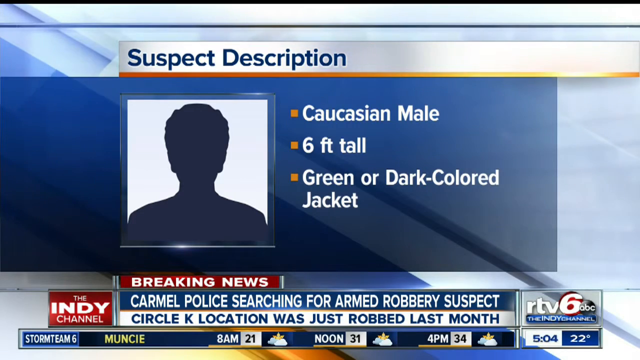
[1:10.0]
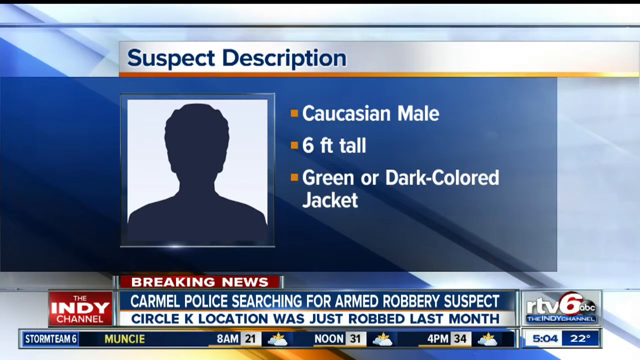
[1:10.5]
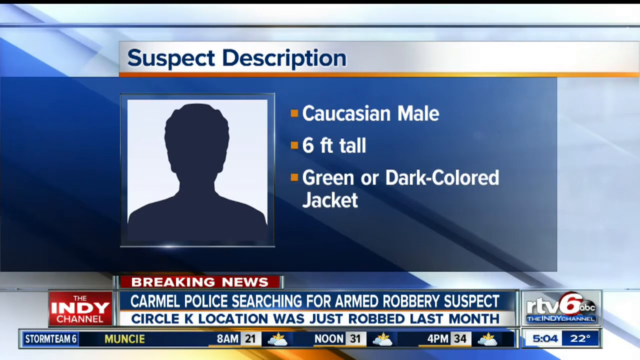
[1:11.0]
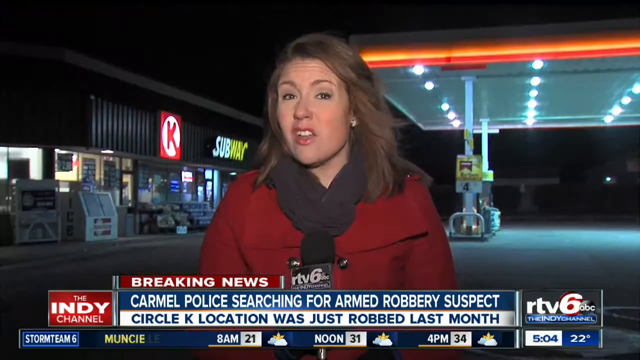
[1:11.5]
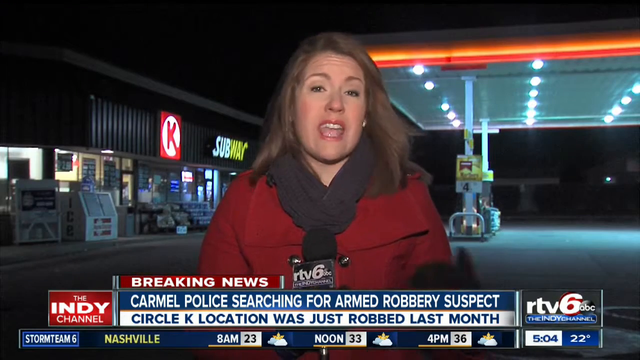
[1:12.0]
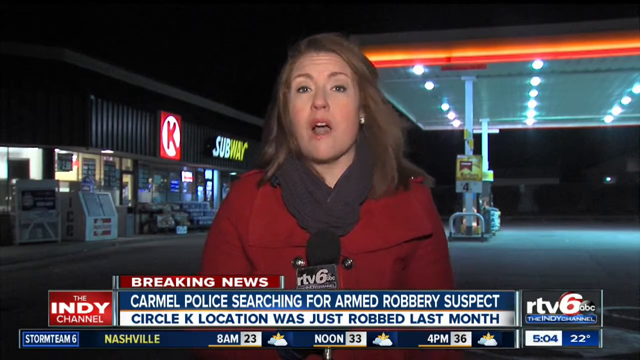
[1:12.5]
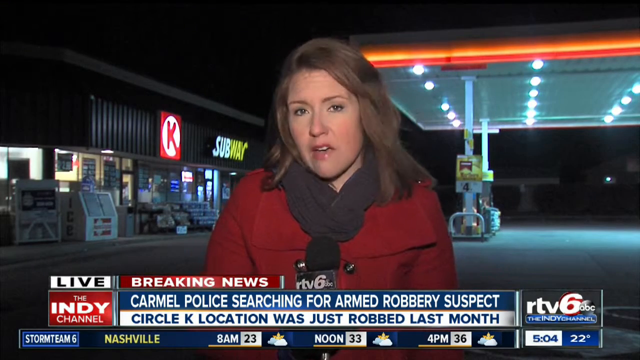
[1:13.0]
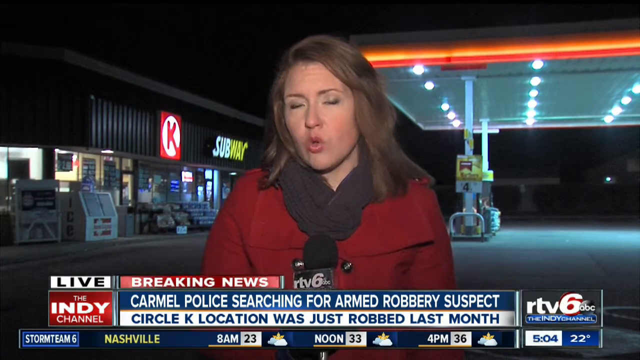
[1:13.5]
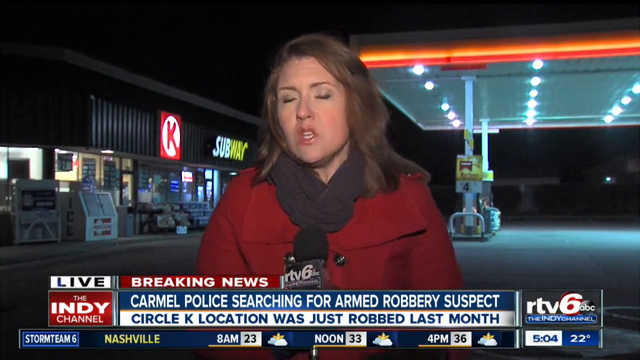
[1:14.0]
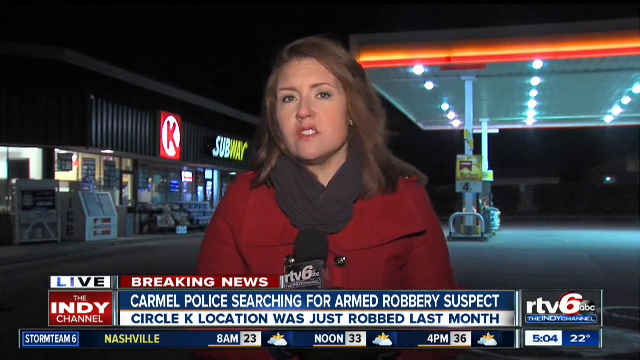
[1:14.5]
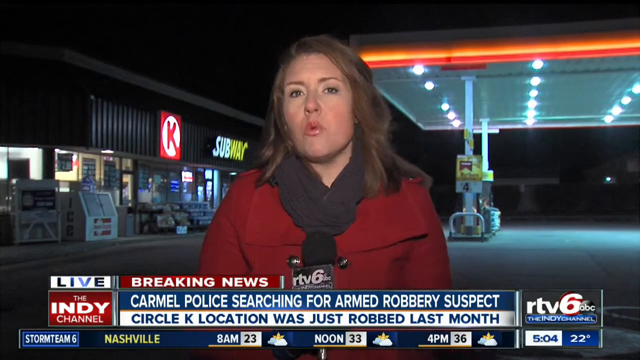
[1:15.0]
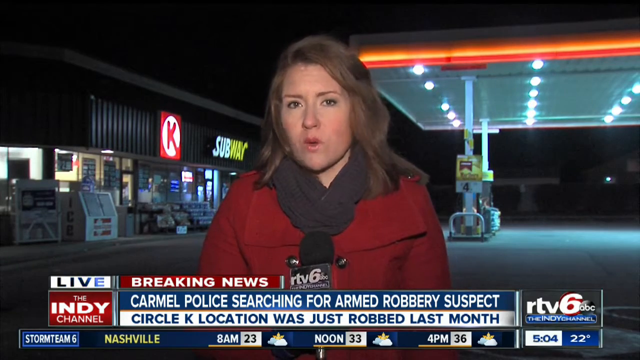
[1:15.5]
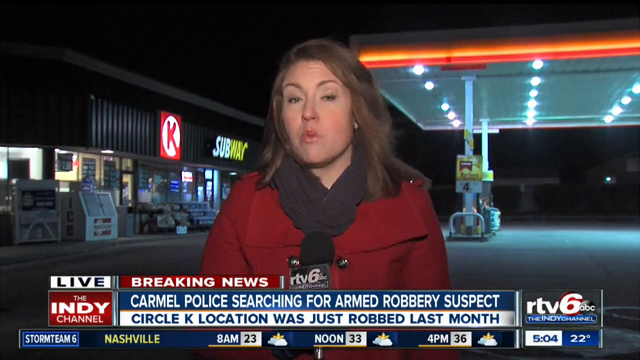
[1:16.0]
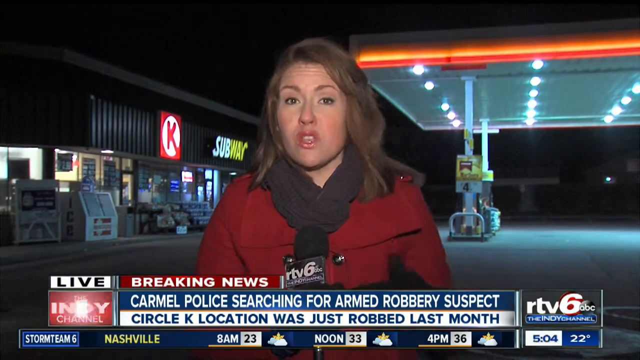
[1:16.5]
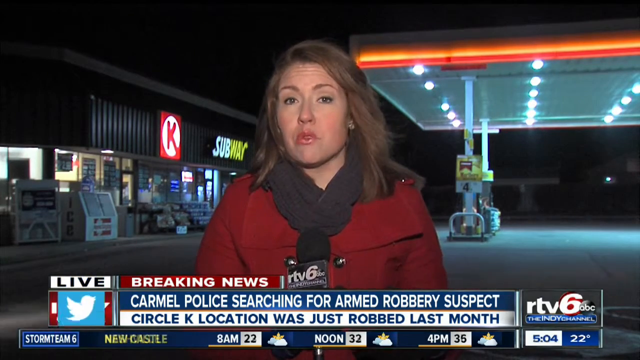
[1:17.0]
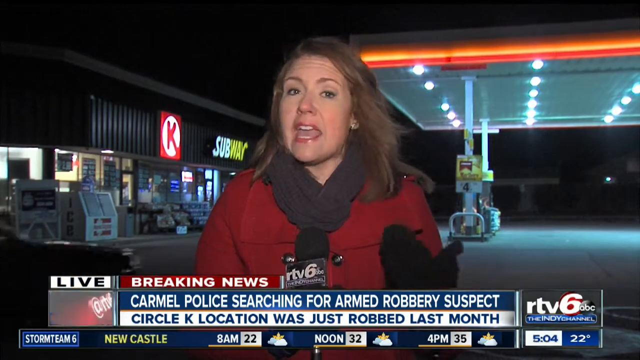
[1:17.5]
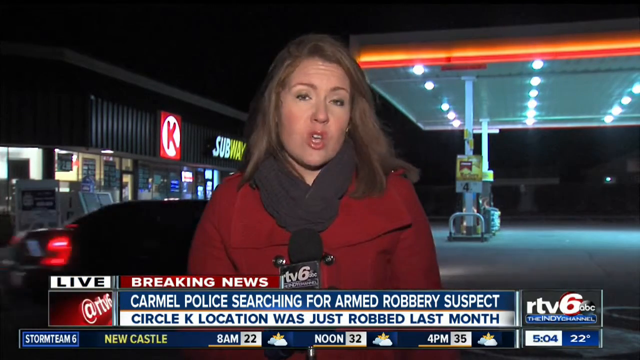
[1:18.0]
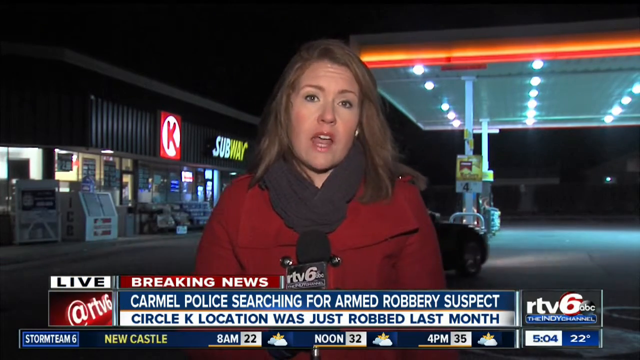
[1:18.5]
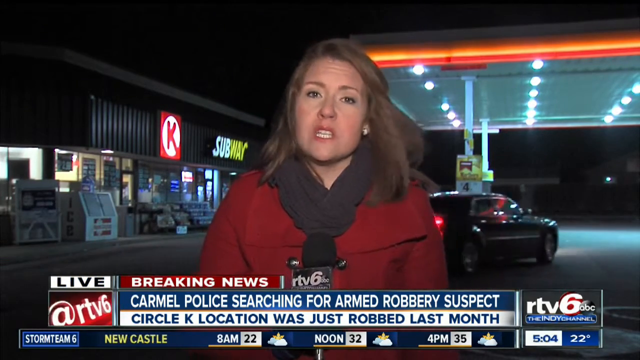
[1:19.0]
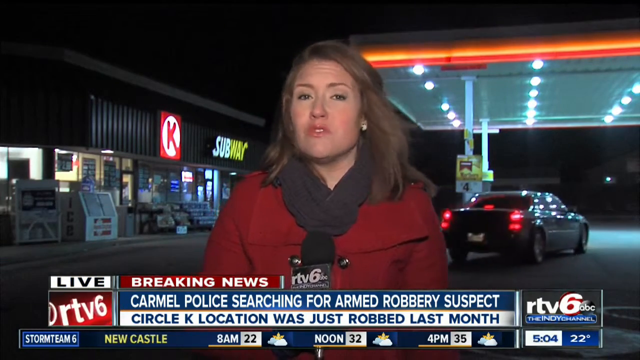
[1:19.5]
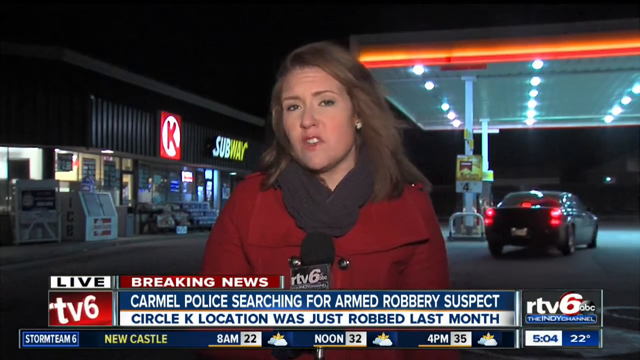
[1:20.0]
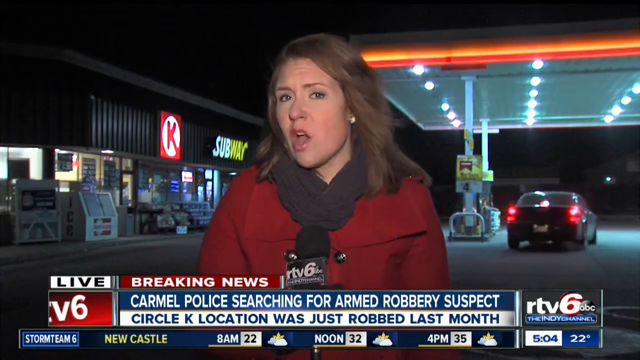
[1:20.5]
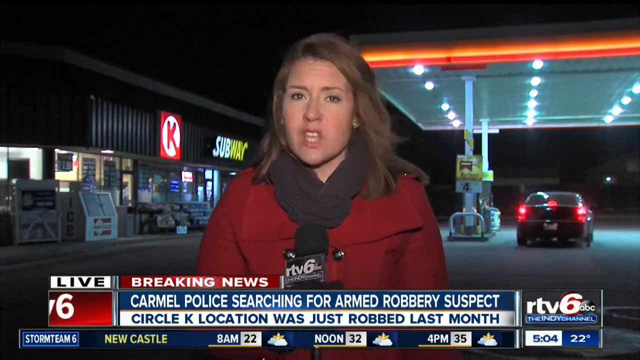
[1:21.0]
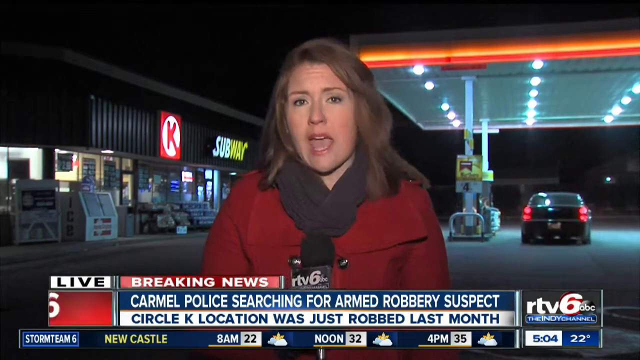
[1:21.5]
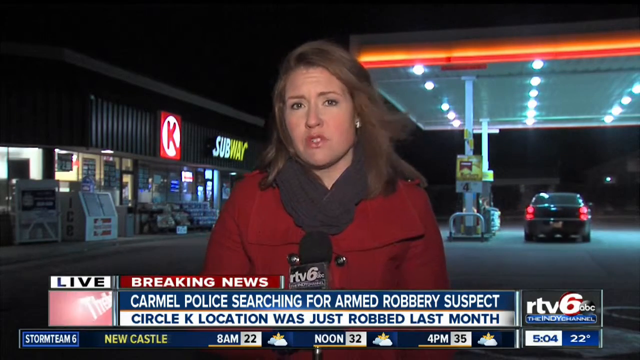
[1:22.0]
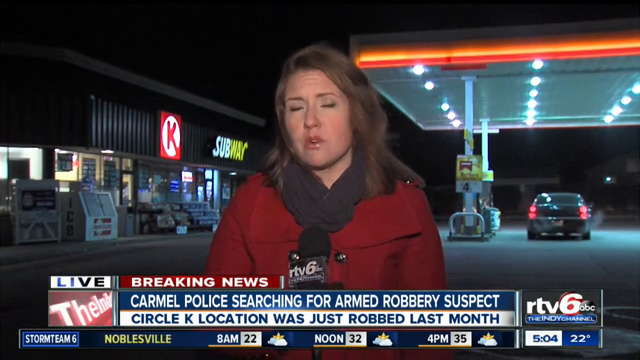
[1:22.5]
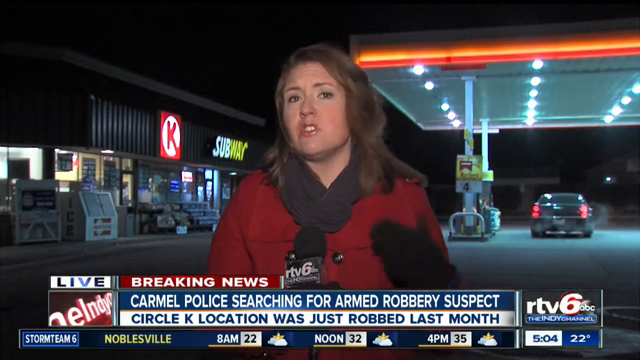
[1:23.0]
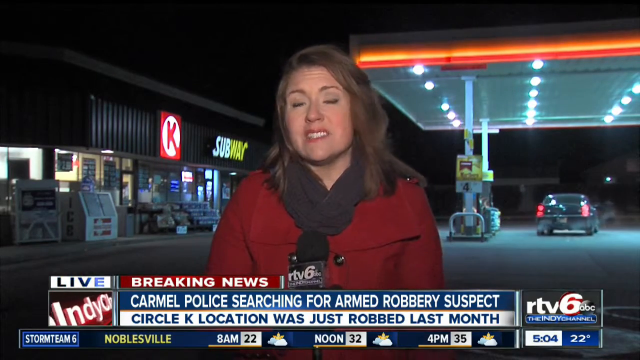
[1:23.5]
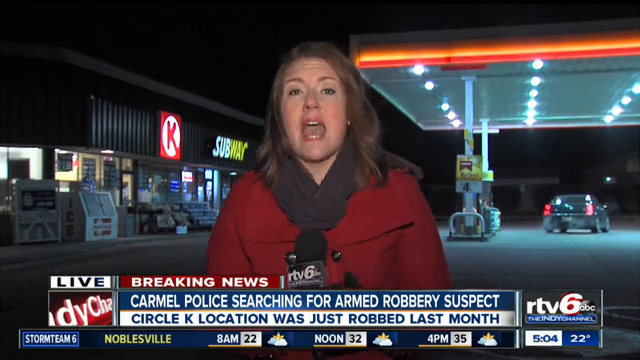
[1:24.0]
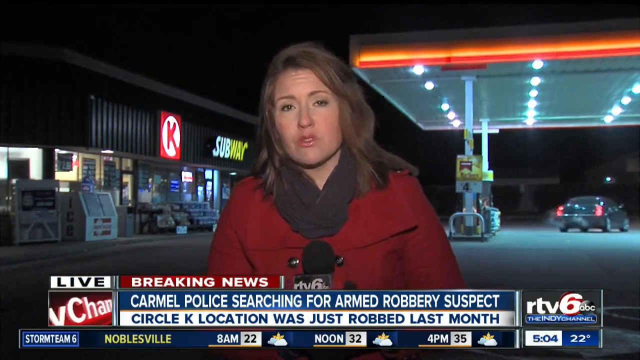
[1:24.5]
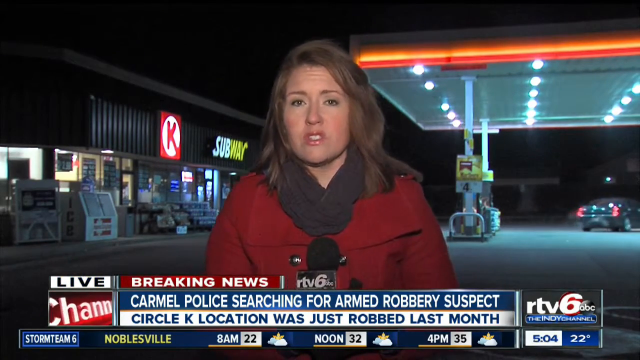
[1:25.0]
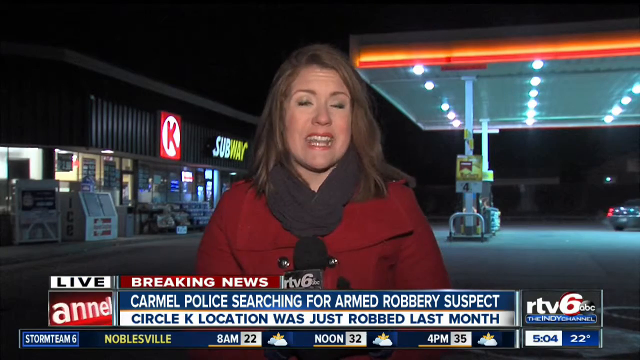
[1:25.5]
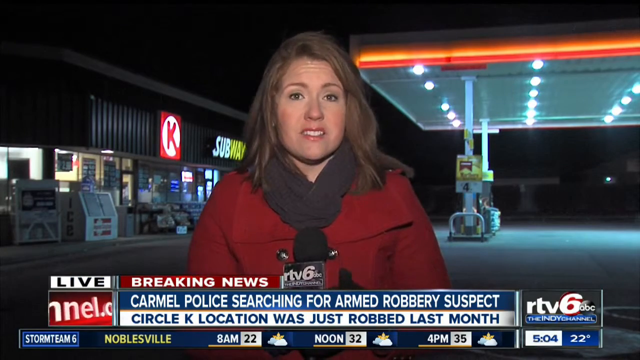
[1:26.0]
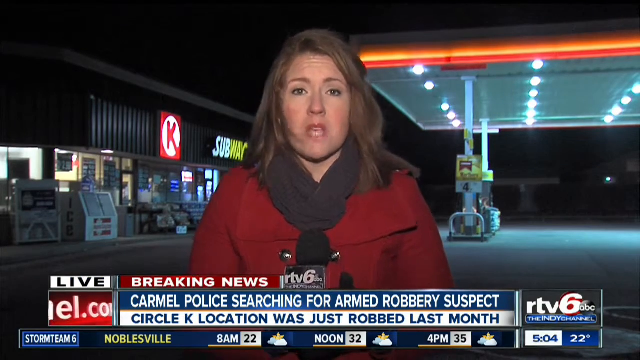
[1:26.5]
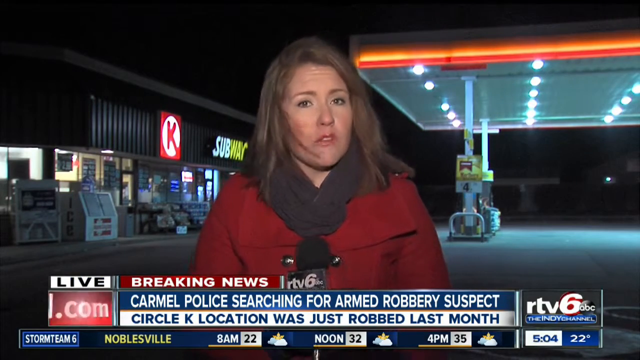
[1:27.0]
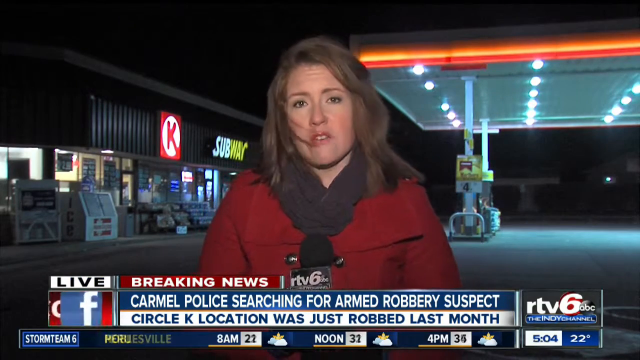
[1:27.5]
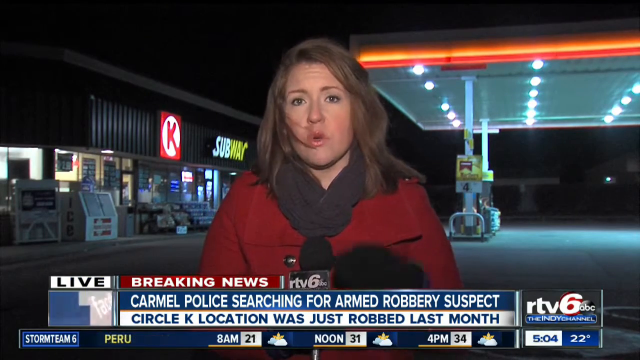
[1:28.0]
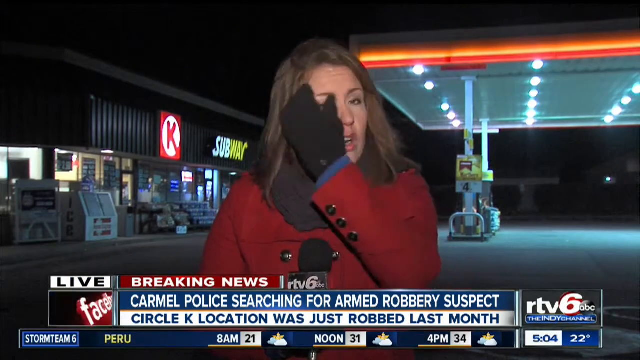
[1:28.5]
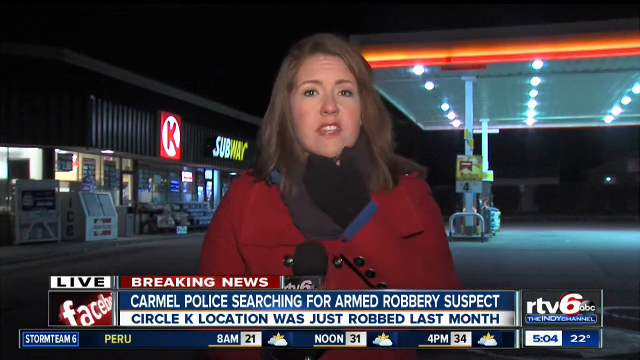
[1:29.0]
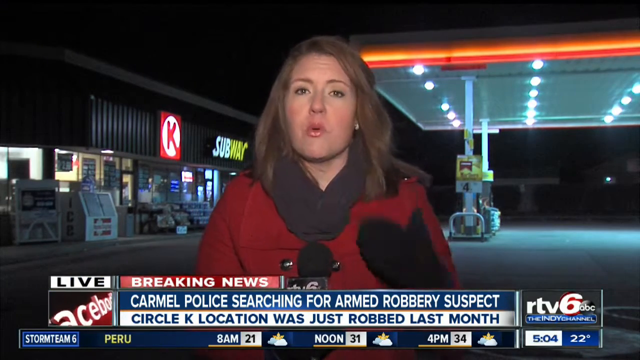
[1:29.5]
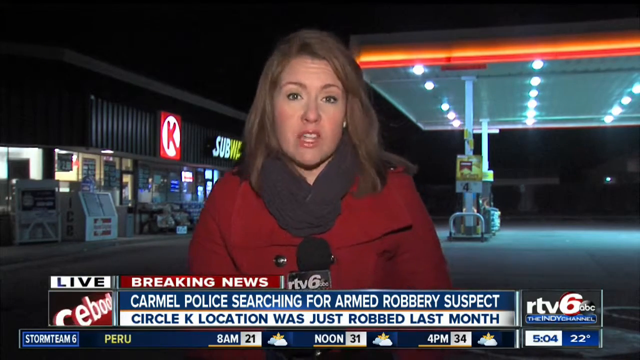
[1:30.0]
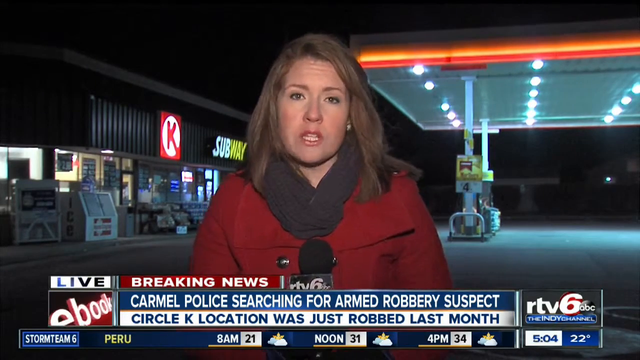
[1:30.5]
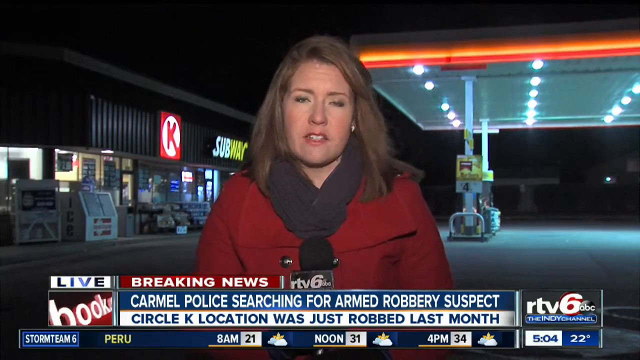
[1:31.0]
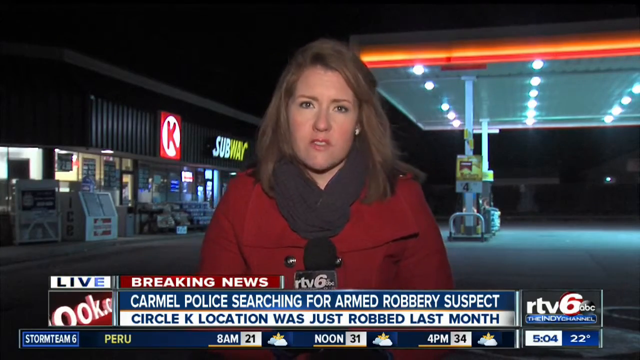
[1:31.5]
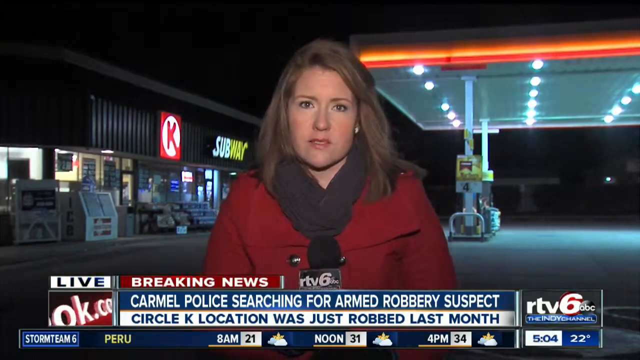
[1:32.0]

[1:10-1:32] At the top of the screen it says "suspect description" in blue letters. Below this is a square on a white background with a dark silhouette of a man. To its right are three yellow squares arranged vertically. Beside the first, in white letters, it says "Caucasian male"; beside the second, "six foot tall"; beside the third, "green or dark colored jacket." Below this it says "breaking news," then "Carmel police searching for armed robbery suspect," and then "Circle K location was just robbed last month." The view then shows the reporter standing out in front of the Circle K gas station, with the pumps on the right side of the screen and the Circle K on the left. She faces the camera and talks, holding a microphone up with her right hand in front of her chest. Her left hand comes up into view every now and then and goes back down as she continues to talk. Her hair blows slightly in the wind; she reaches up with her left hand, moves the hair out of her face, and puts her hand back down.